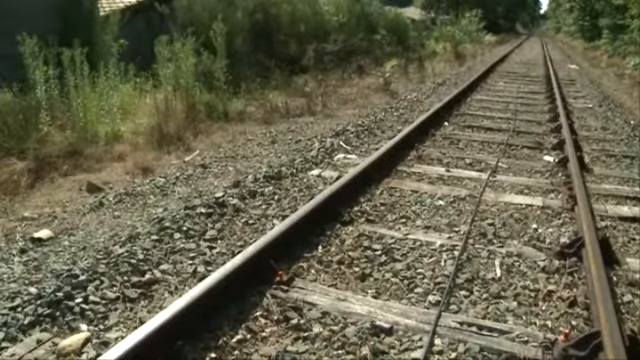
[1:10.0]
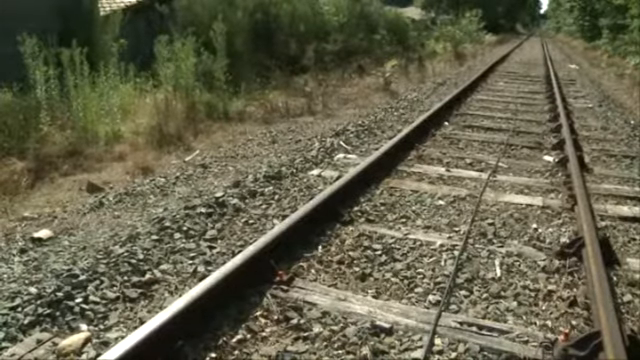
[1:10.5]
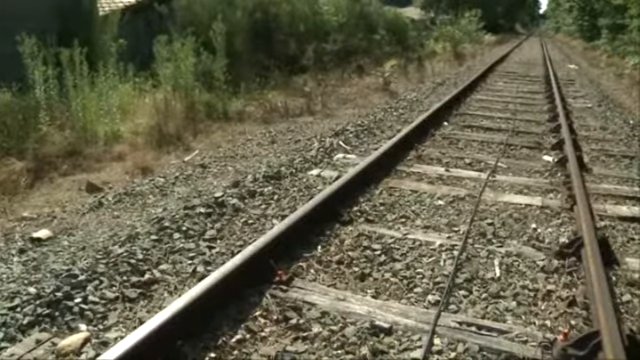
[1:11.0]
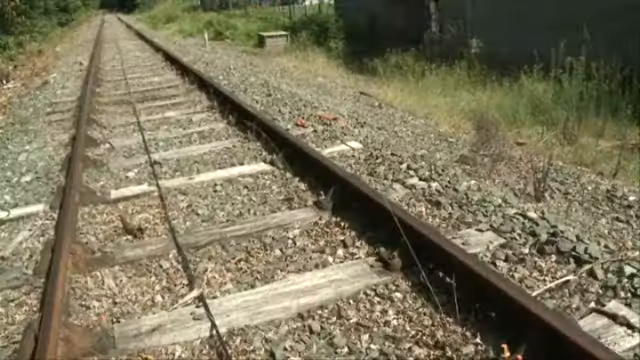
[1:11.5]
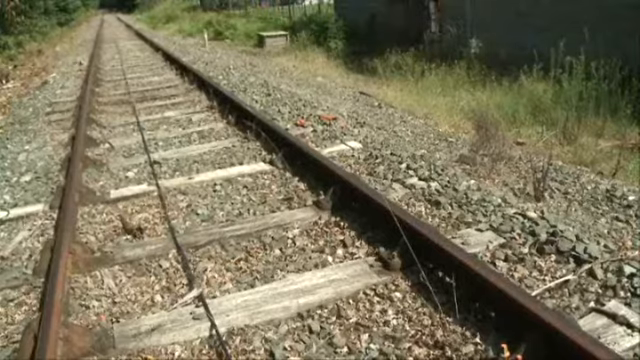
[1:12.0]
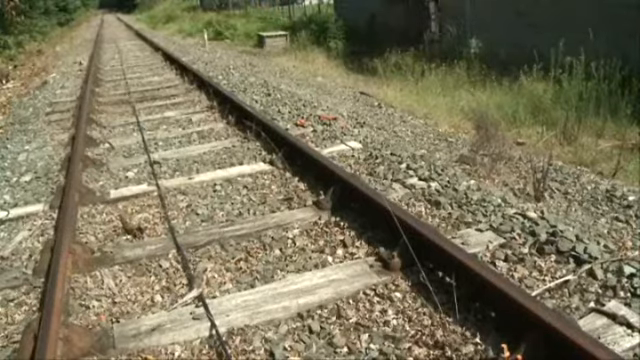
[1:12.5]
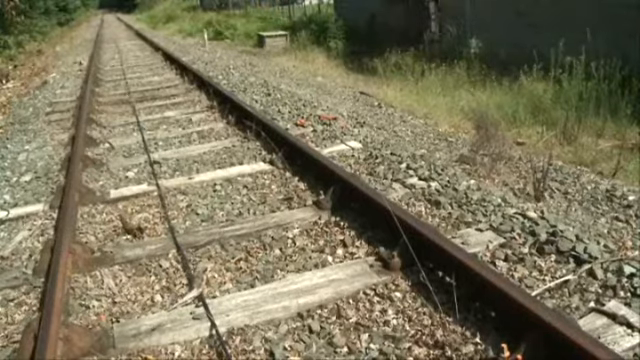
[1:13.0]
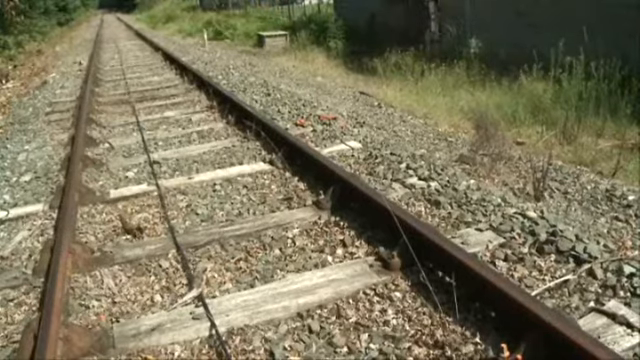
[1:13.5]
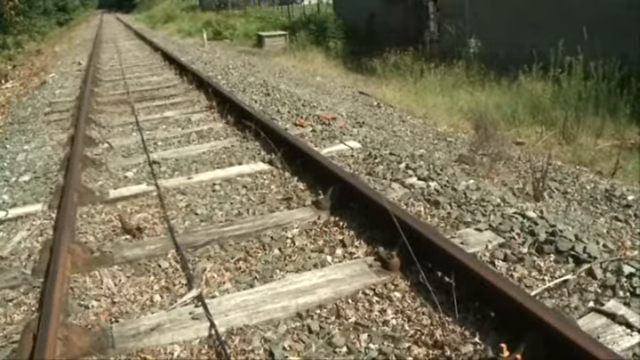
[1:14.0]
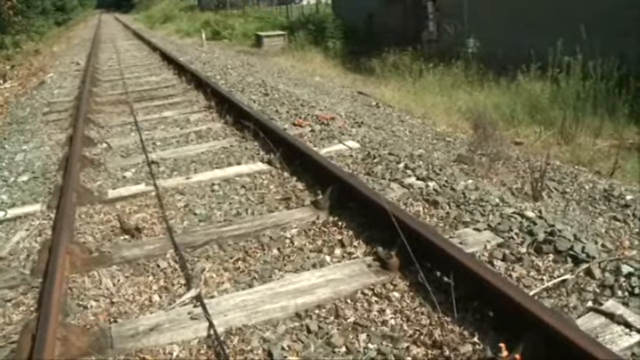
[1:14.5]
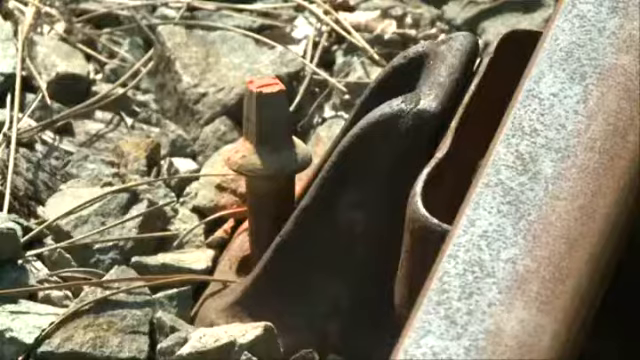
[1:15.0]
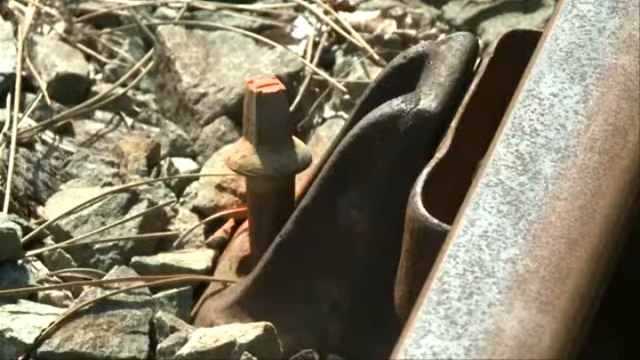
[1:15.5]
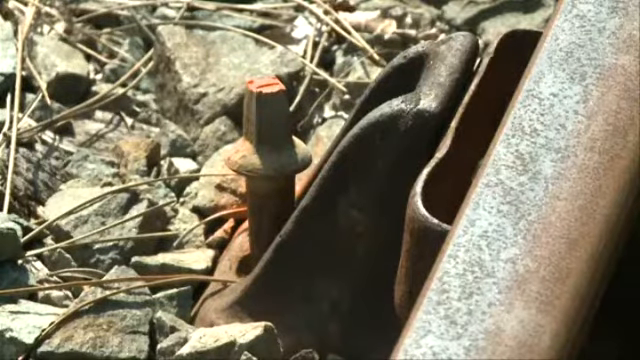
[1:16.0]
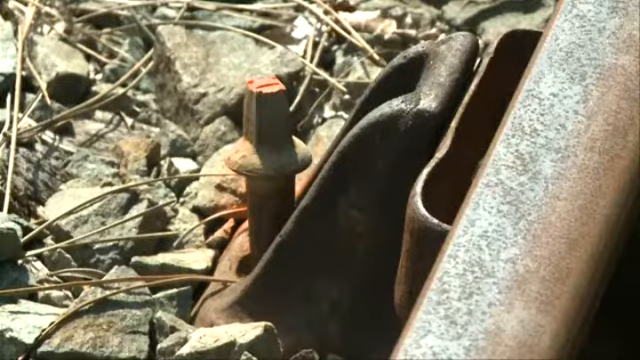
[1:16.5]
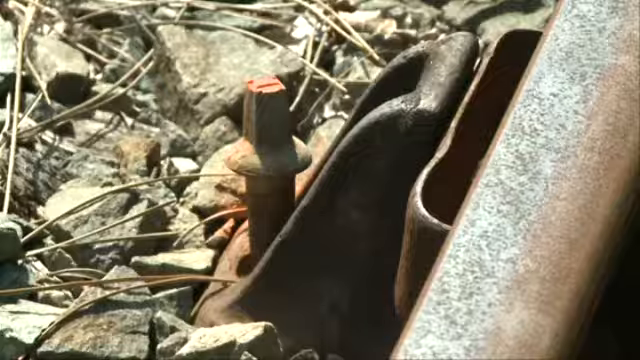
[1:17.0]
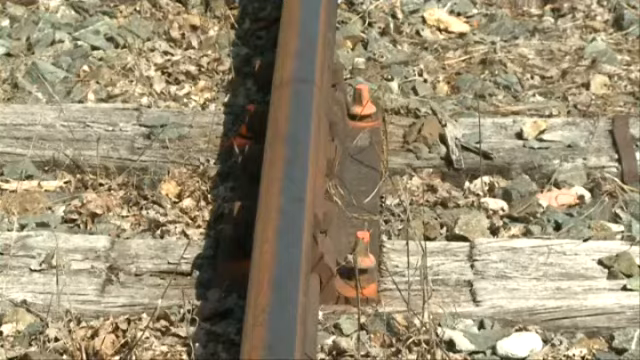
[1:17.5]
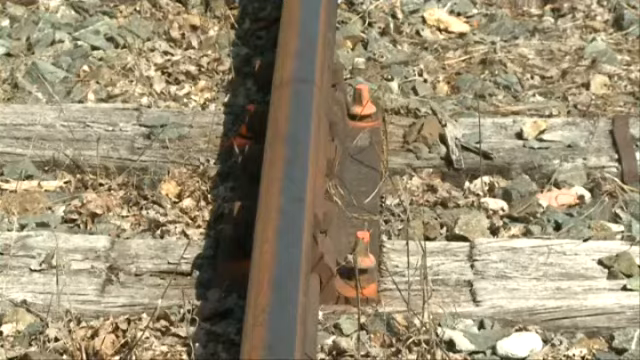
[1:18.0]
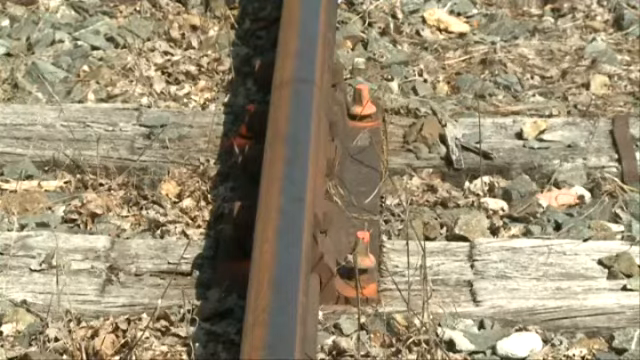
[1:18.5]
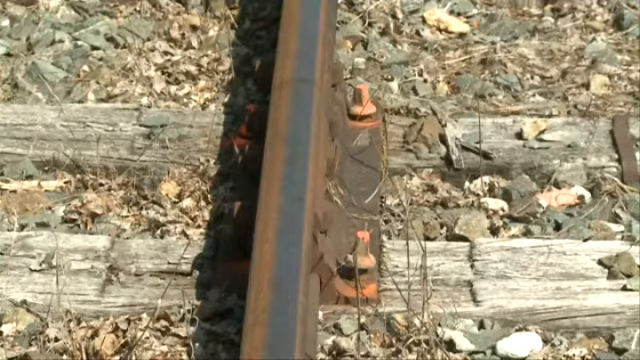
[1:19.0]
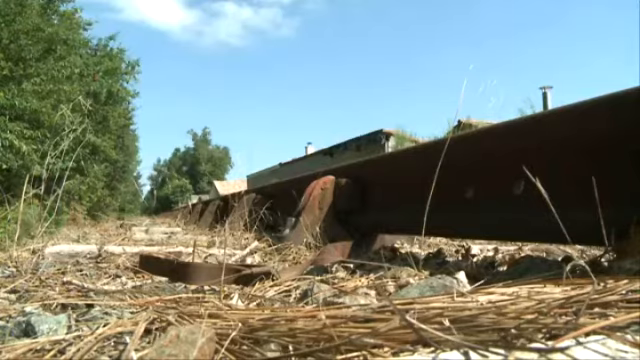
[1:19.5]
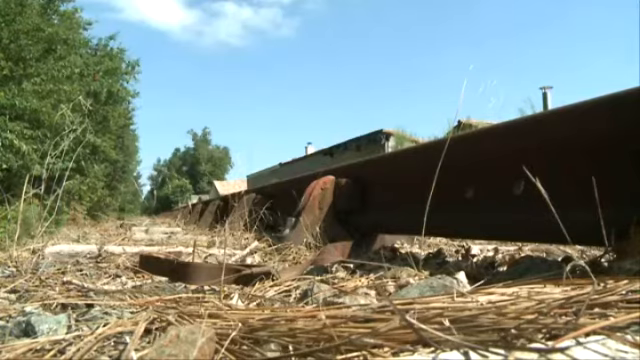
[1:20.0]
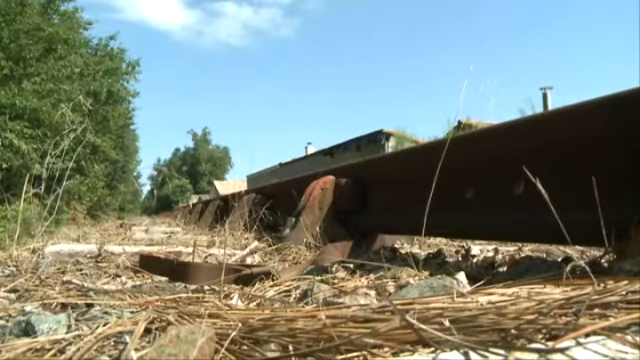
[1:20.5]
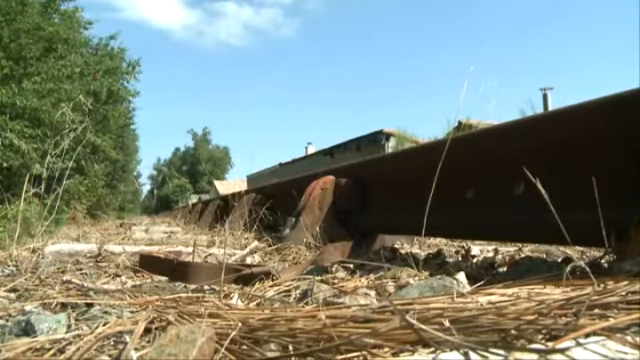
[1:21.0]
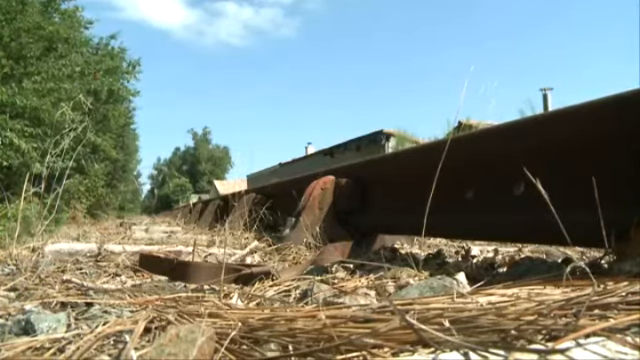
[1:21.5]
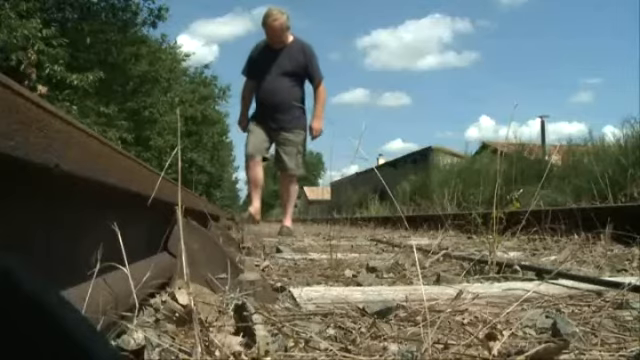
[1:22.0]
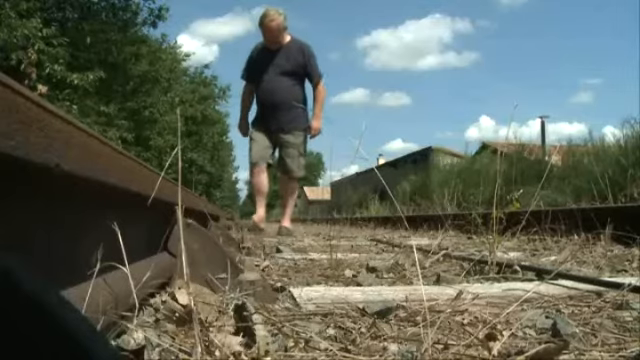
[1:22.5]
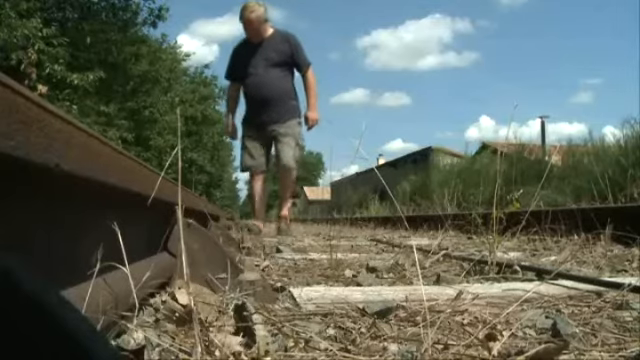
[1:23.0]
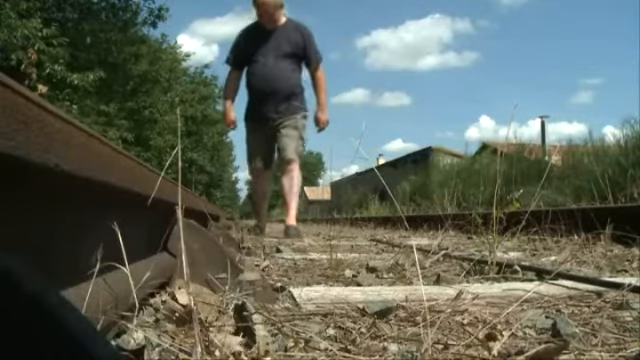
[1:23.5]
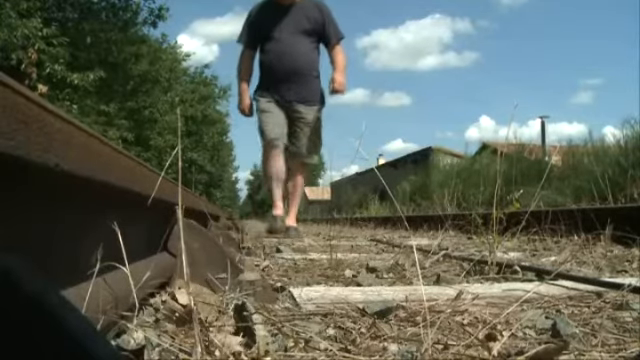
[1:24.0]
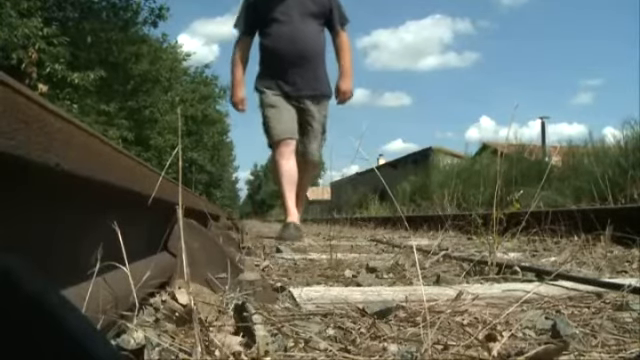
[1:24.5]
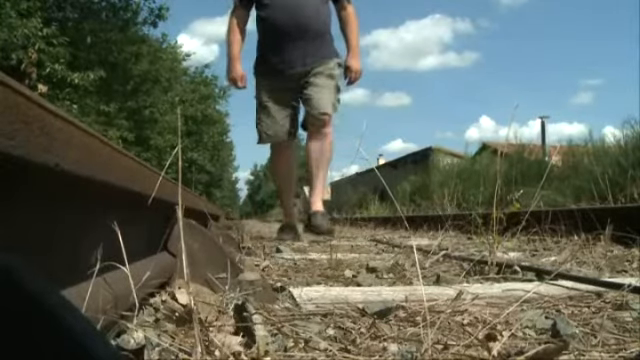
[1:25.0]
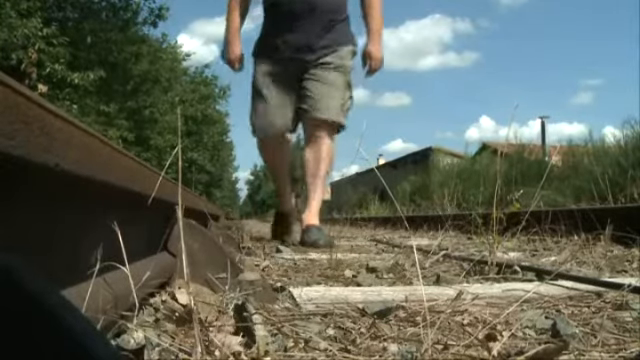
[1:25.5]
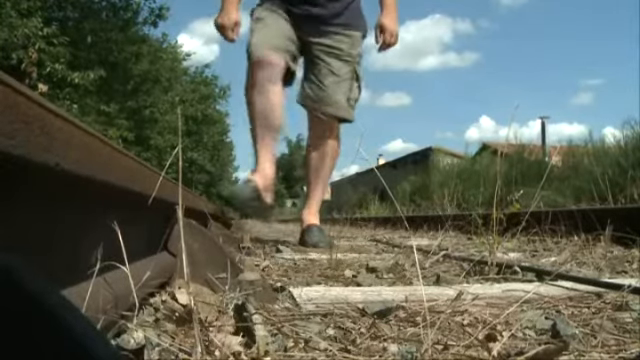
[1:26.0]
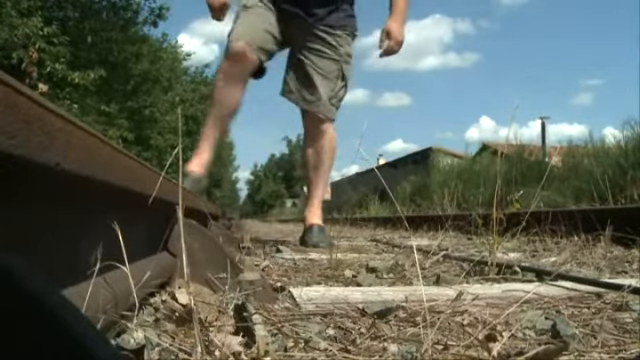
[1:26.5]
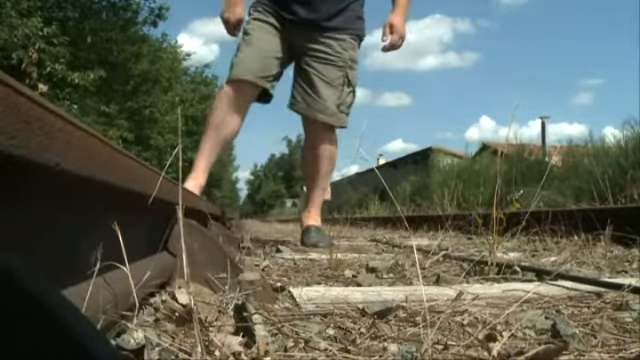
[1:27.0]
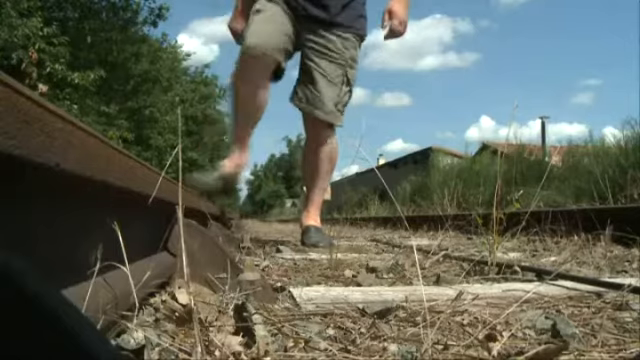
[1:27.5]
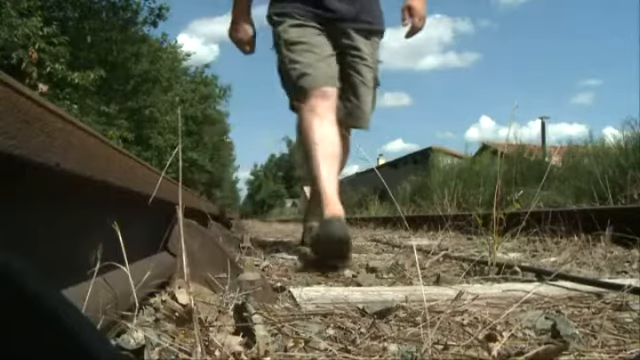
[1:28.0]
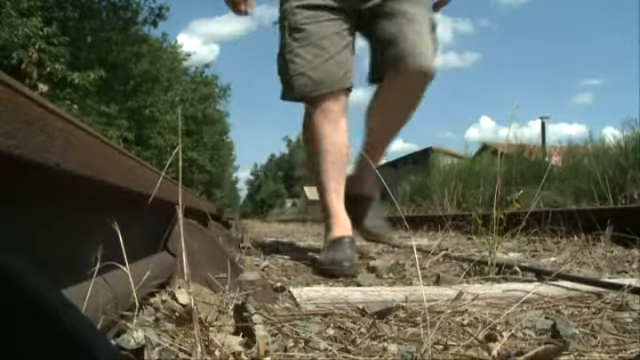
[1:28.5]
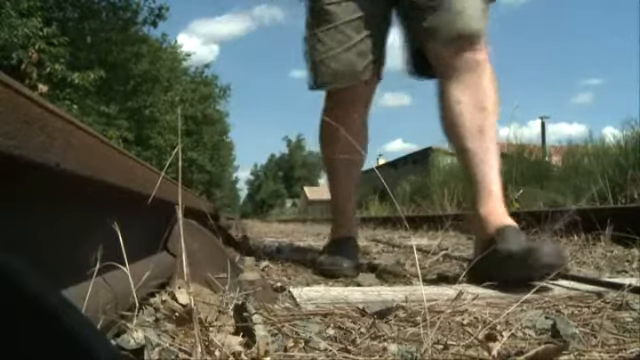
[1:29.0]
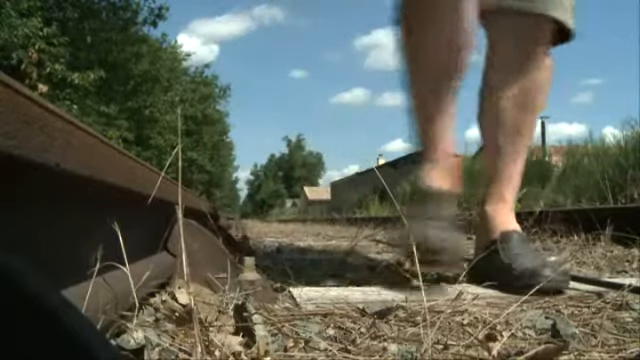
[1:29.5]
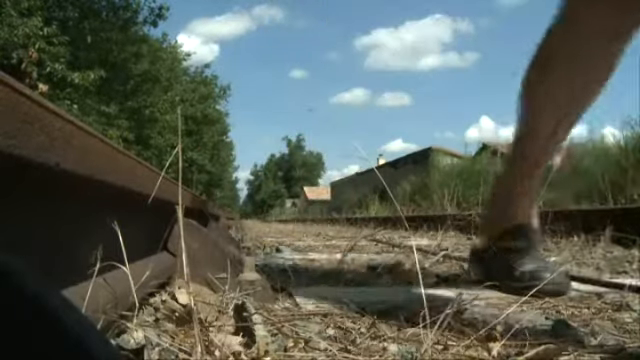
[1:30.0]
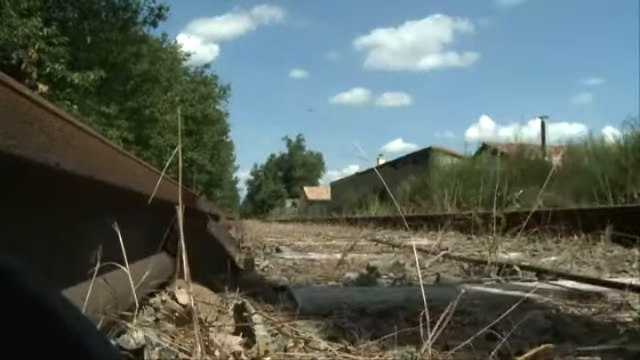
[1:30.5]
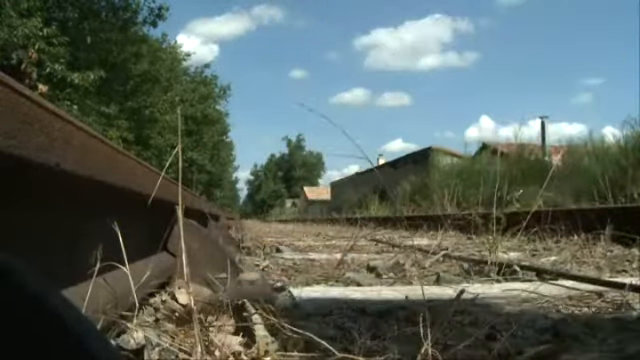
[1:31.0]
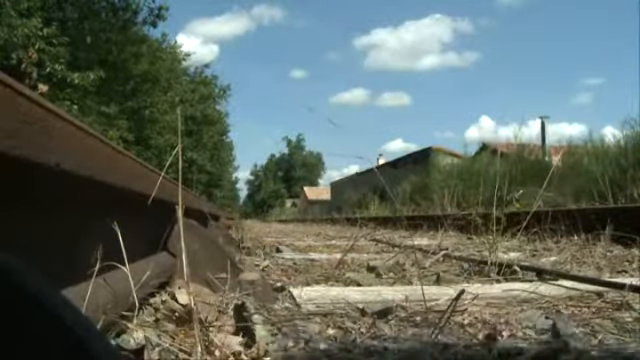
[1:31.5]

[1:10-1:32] Different views of the railroad track are shown. First is one of the bolts, apparently not properly bolted down on the track. A close-up shows still railroad track with gravel and dry to green brush to the left, with a small sliver of the green forest line to the right. The camera pans to the other side, showing another angle of the mixed green and dry brush, followed by higher and lower angles of the track. The man walks along the railroad track and kicks it, showing that it moves easily without much force. He wears green shorts and black rubber shoes, not boots, and is a white man apparently in his mid to late 60s. He also seems to be putting things back into place with his shoes.